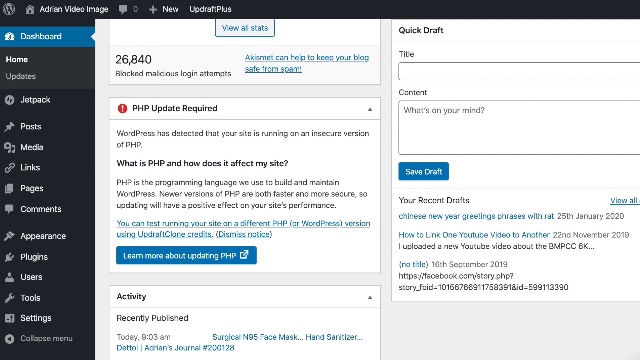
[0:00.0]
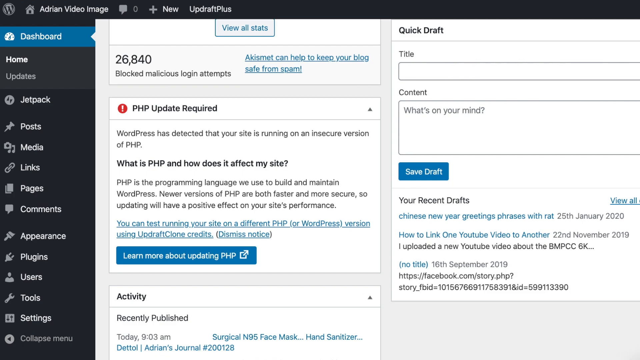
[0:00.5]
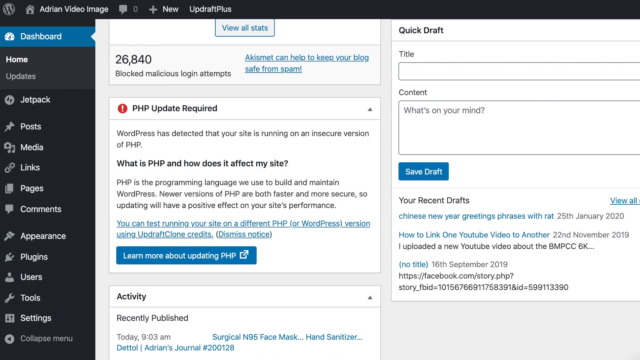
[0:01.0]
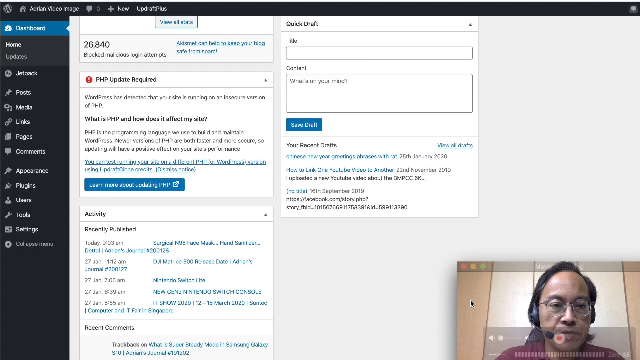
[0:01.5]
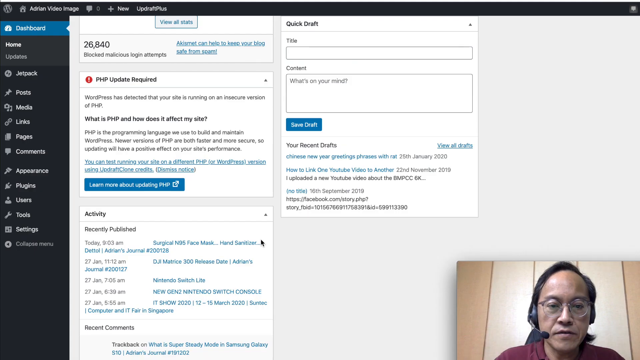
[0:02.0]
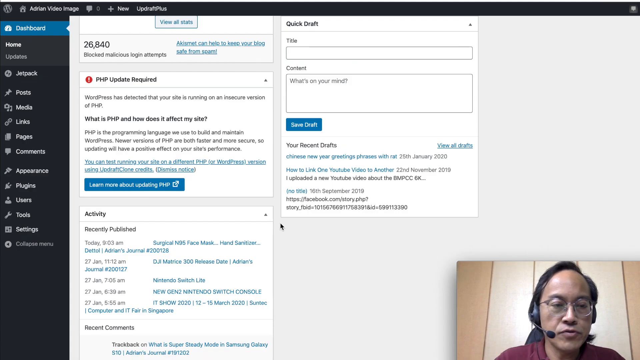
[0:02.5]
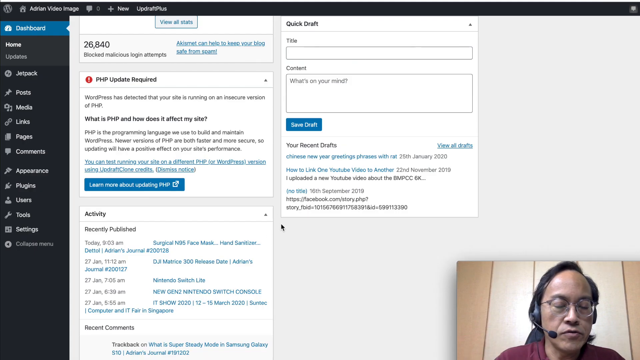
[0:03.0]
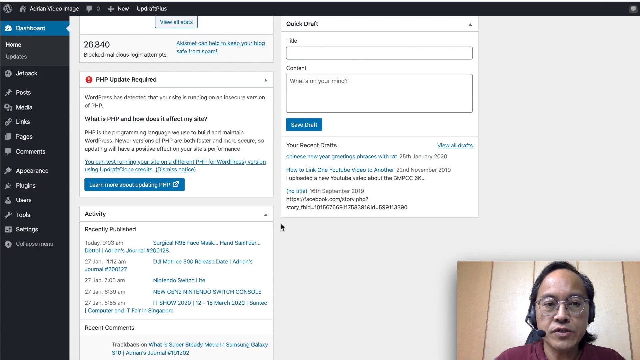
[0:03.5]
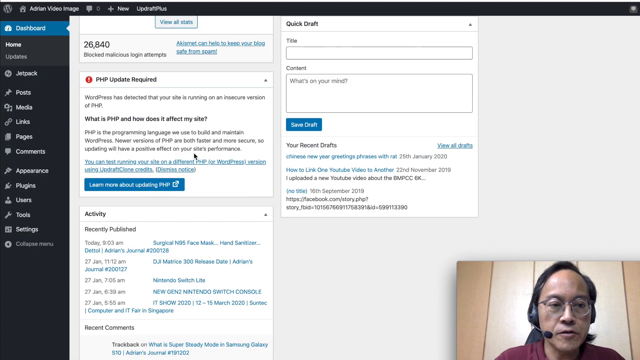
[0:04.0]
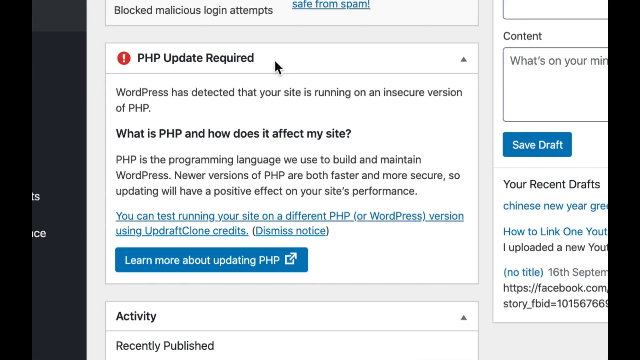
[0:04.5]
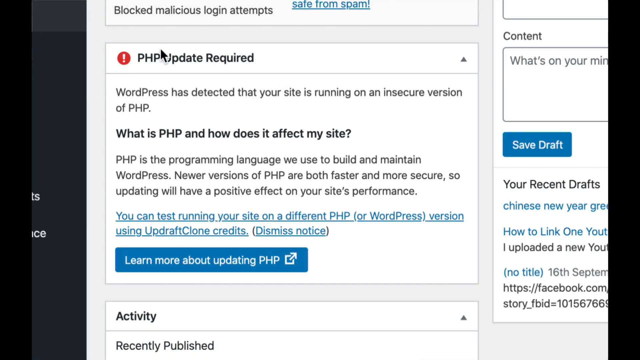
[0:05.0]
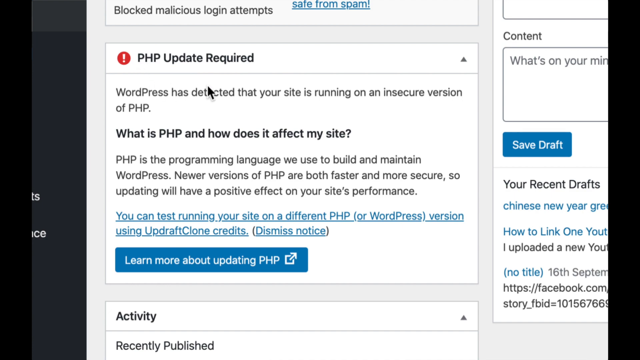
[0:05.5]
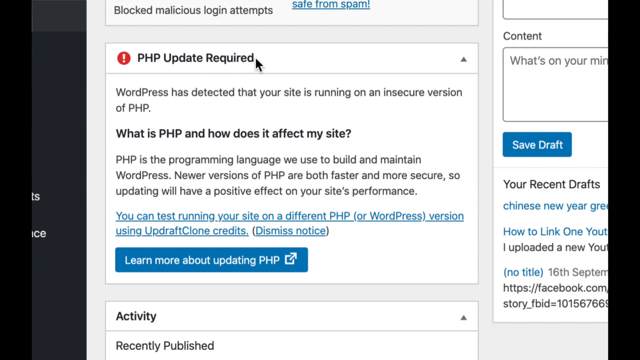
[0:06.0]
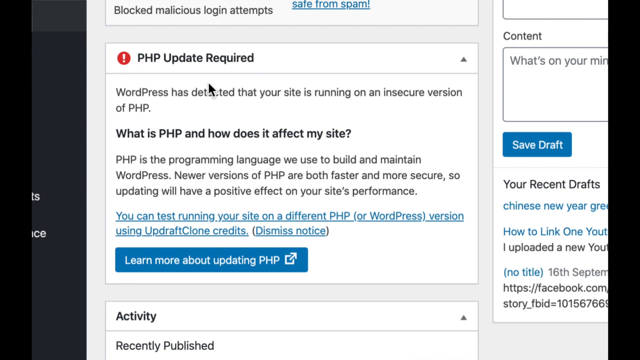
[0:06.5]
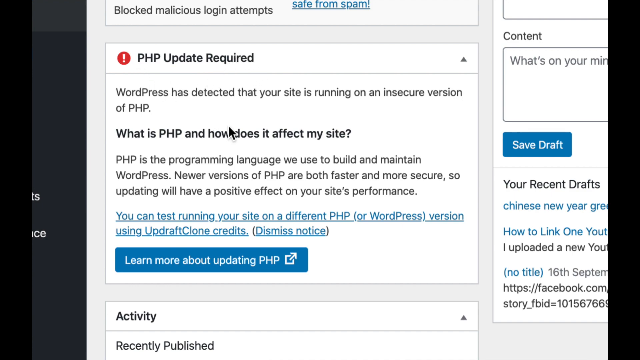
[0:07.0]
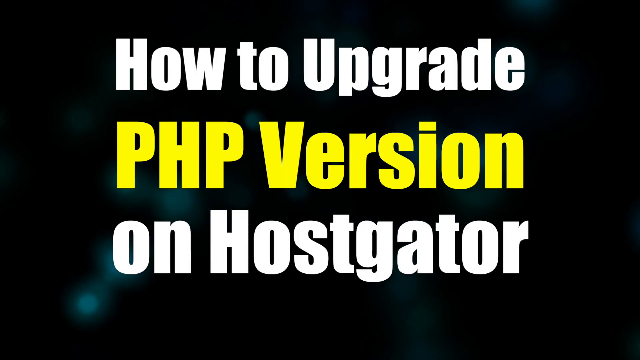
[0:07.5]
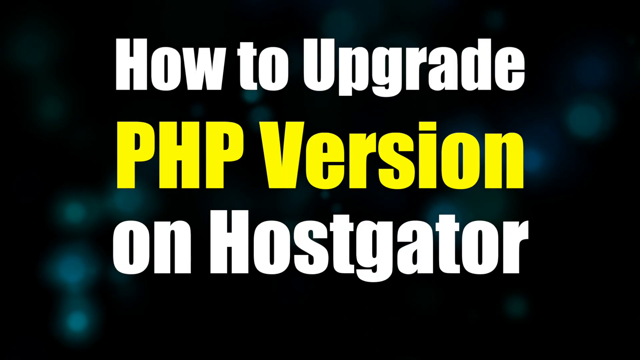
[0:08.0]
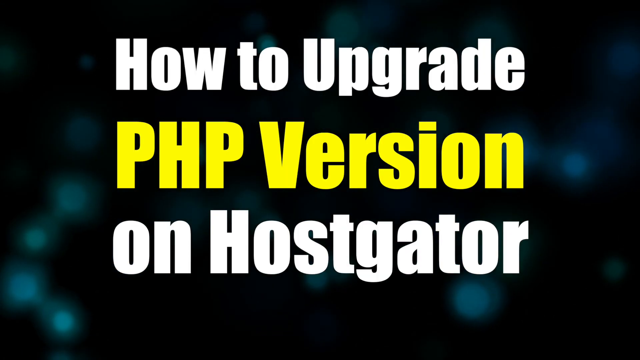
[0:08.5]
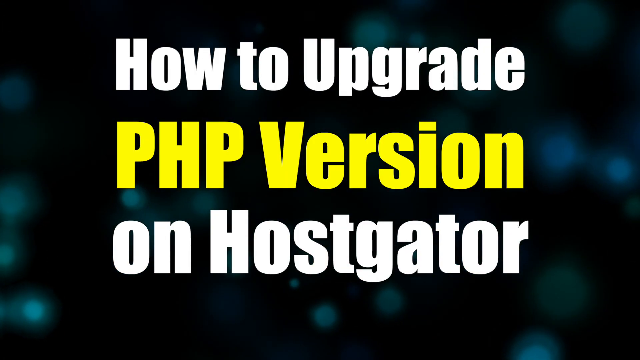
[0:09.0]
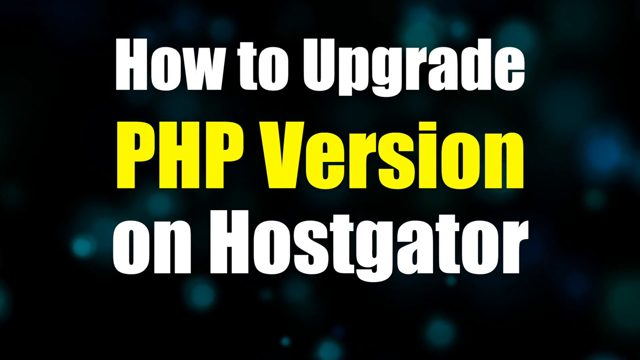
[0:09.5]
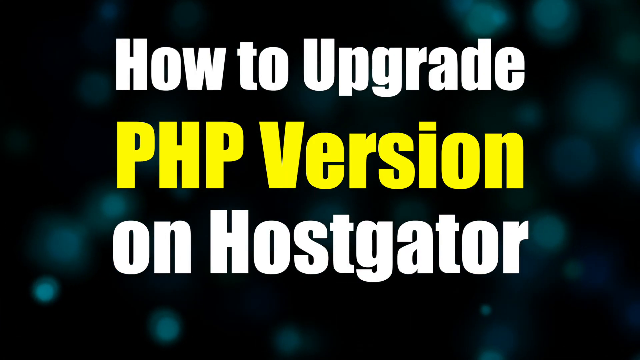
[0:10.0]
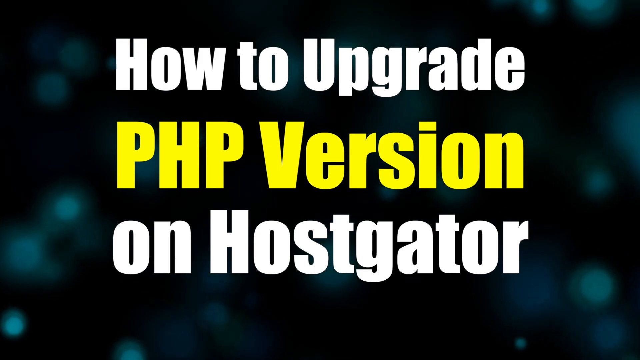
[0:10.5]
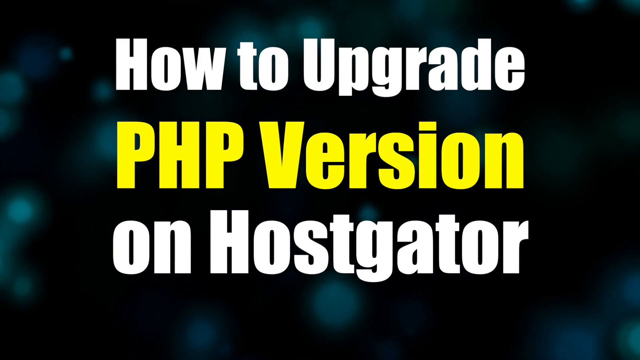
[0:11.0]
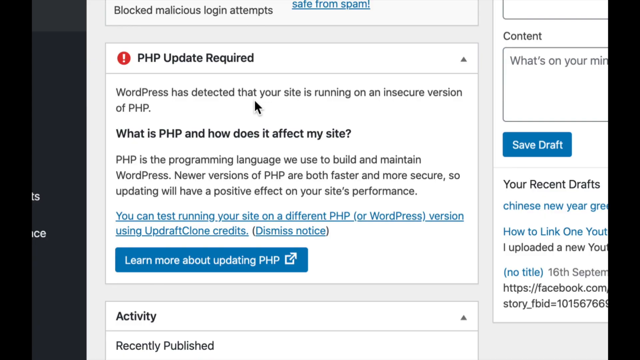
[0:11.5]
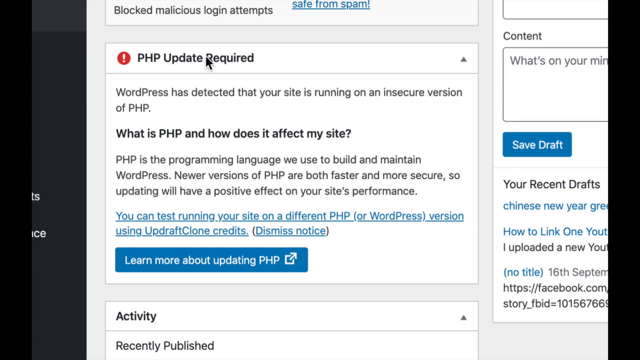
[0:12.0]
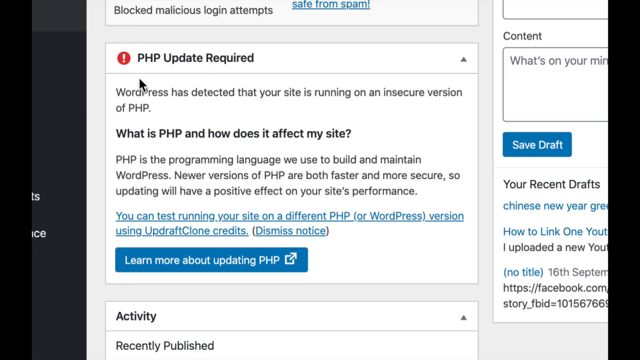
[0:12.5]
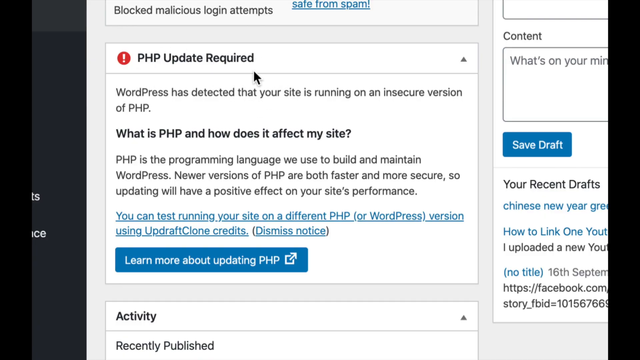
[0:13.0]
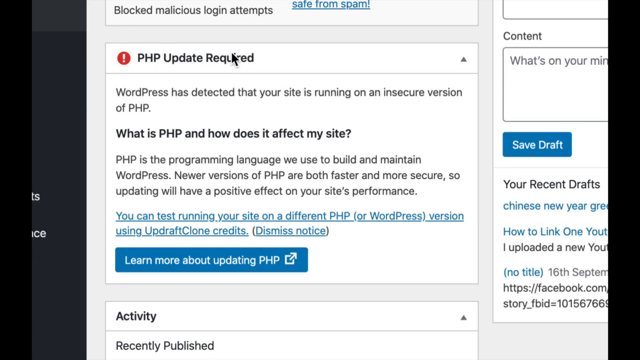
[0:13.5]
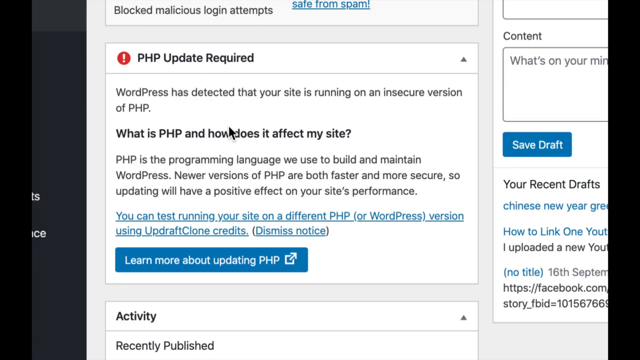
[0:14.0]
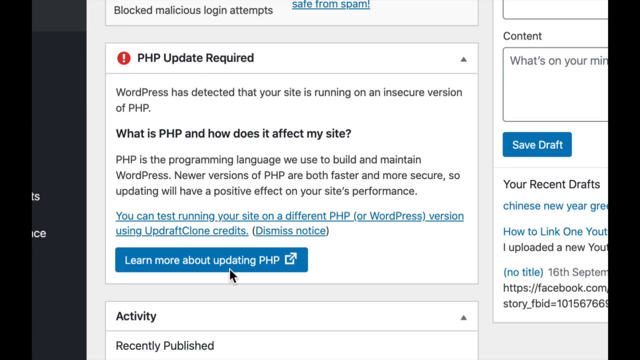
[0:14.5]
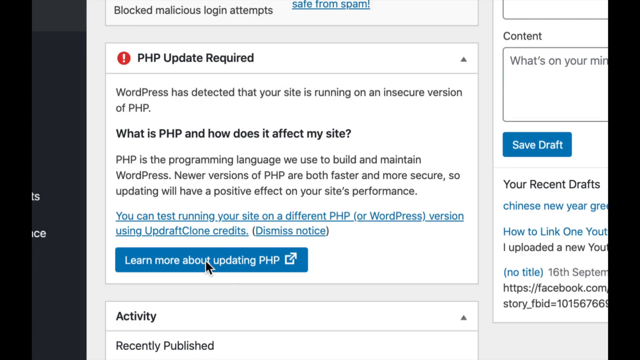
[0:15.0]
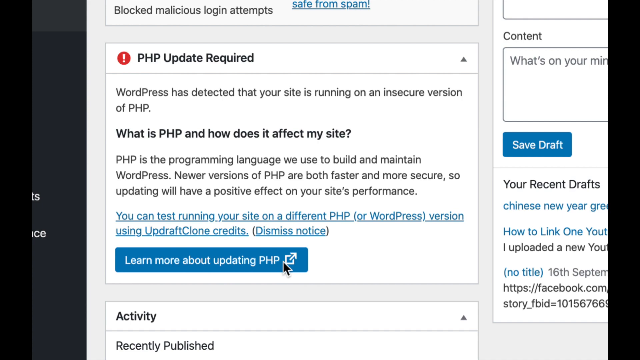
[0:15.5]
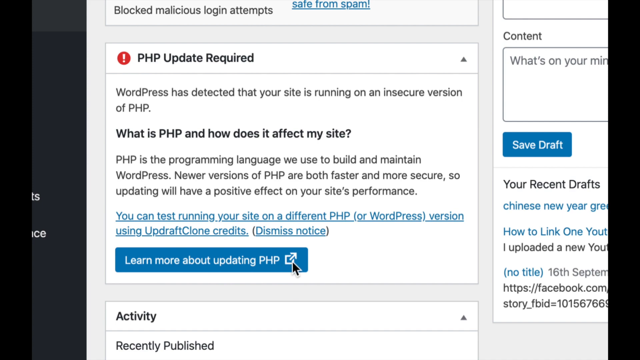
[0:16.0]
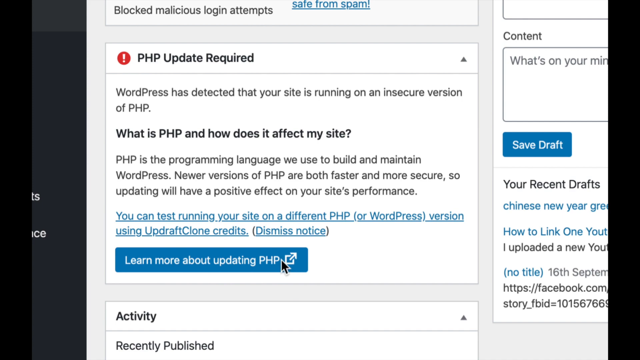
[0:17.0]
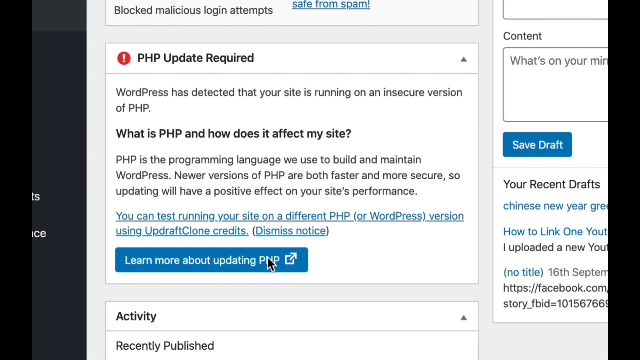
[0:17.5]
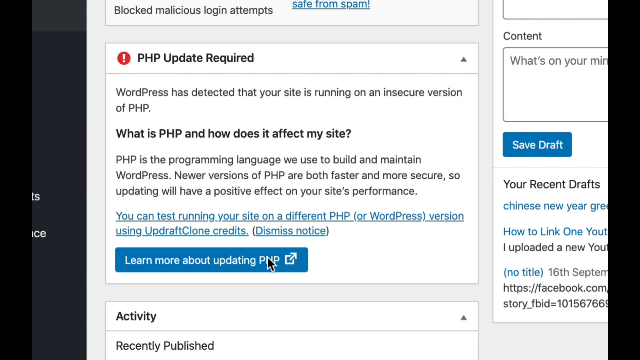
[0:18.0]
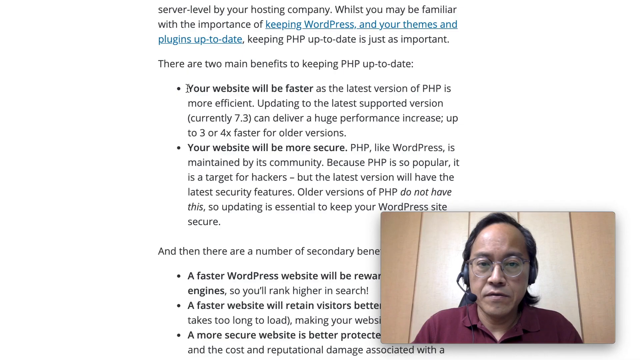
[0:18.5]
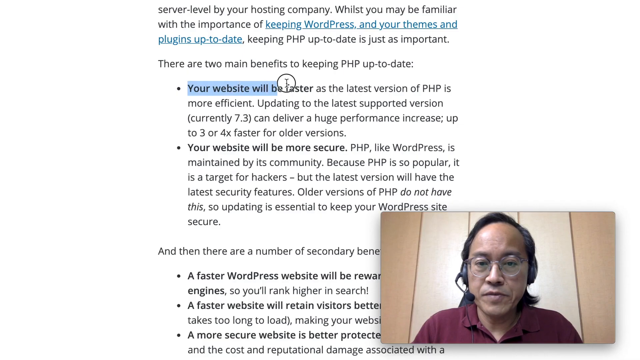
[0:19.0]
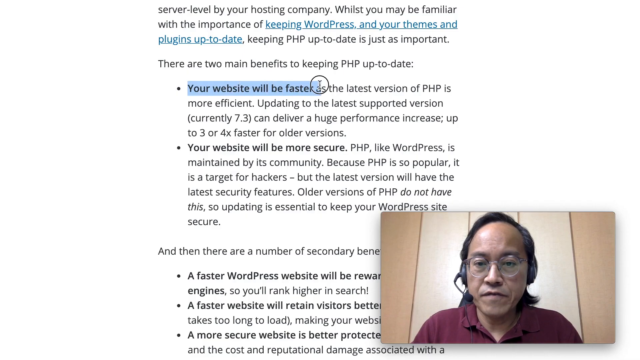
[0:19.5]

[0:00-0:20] A dashboard appears on screen with an item labeled "updraft plus" and the text "26,840 blocked malicious login attempts." A notice reads "PHP update required" and "WordPress has detected that your site is running on an insecure version of PHP," followed by "PHP is a programming language we use to build and maintain WordPress. Newer versions of PHP are both faster and more secure, so updating will have a positive effect on your site's performance." On the other side of the screen are "quick draft" and "your recent drafts" sections. At the bottom of the screen is a man wearing headphones who looks Asian. He zooms in on the "PHP update required" section. Text then reads "how to upgrade your PHP version on HostGator" while he is still looking at the "PHP update required" section. Next, text reads "there are two main benefits to keeping PHP up to date," "Your website will be faster as the latest version of PHP is more efficient," and "Your website will be more secure."